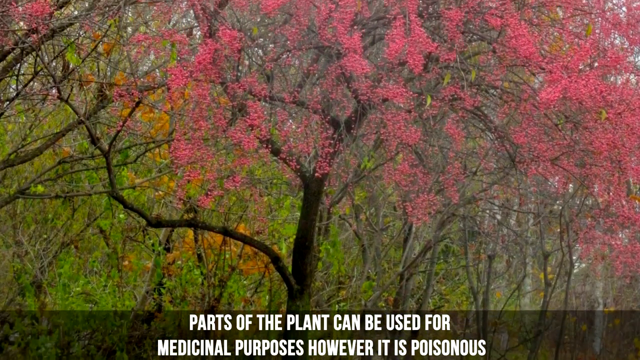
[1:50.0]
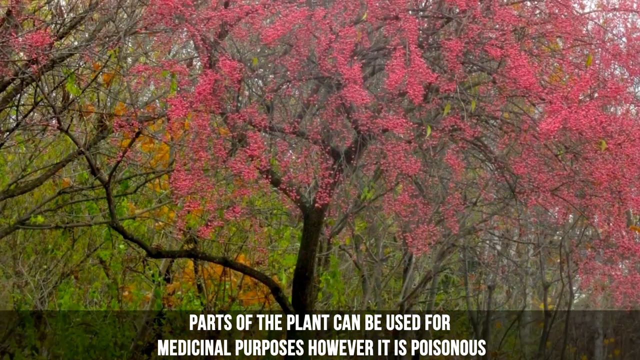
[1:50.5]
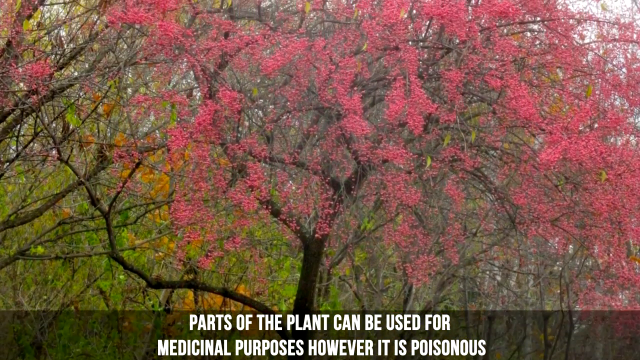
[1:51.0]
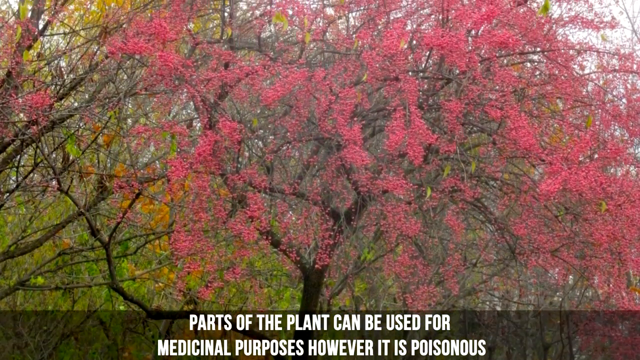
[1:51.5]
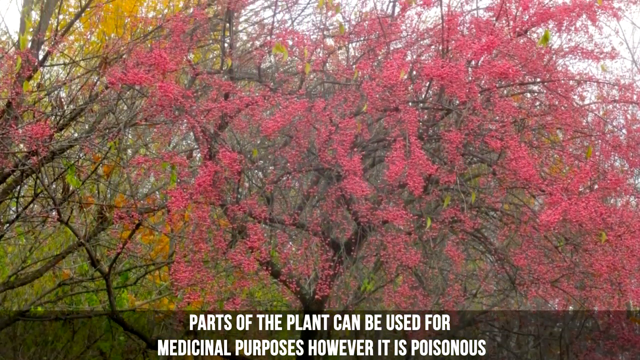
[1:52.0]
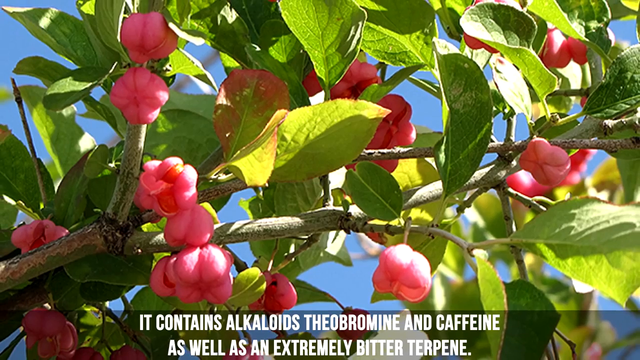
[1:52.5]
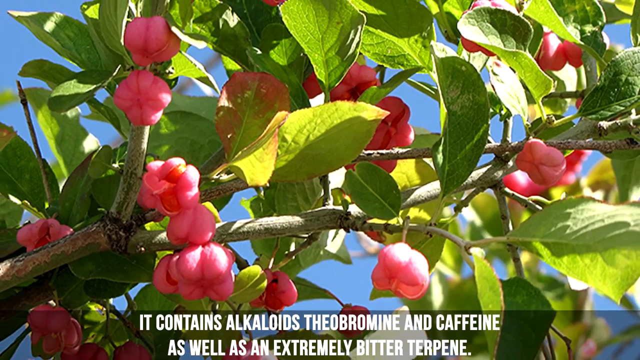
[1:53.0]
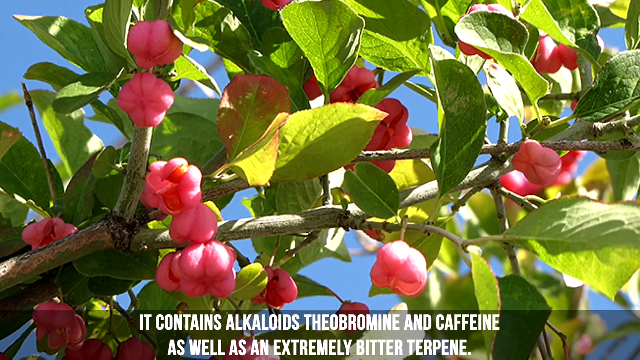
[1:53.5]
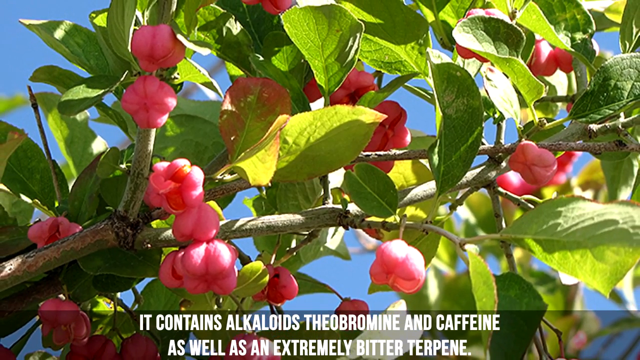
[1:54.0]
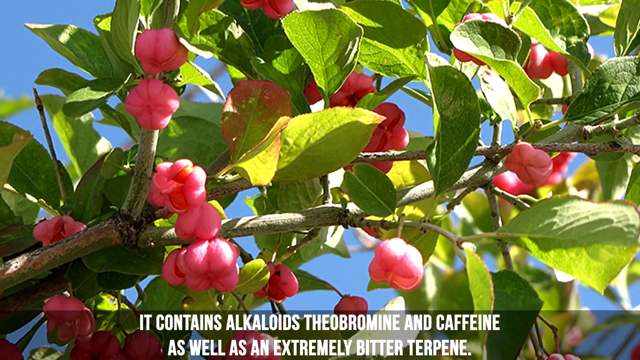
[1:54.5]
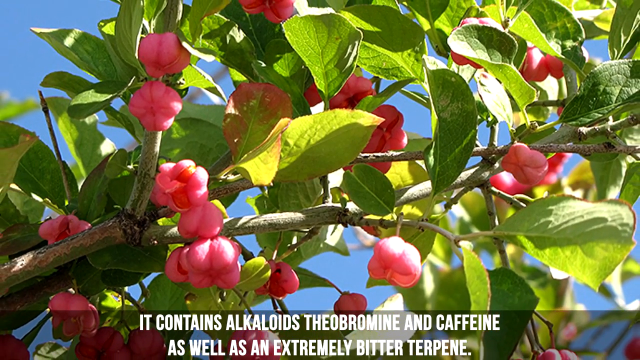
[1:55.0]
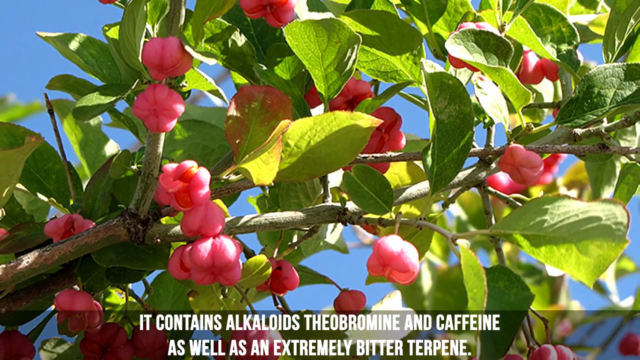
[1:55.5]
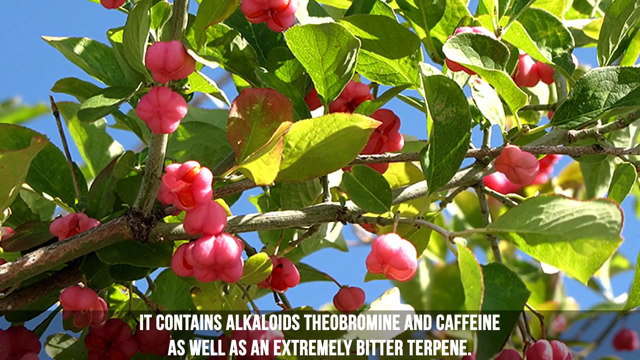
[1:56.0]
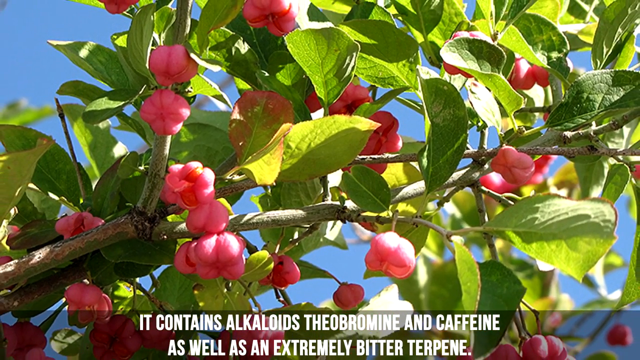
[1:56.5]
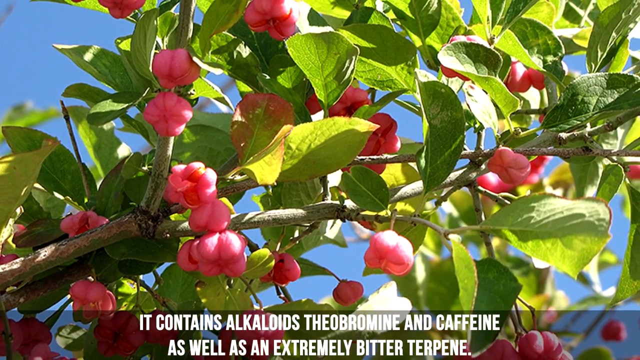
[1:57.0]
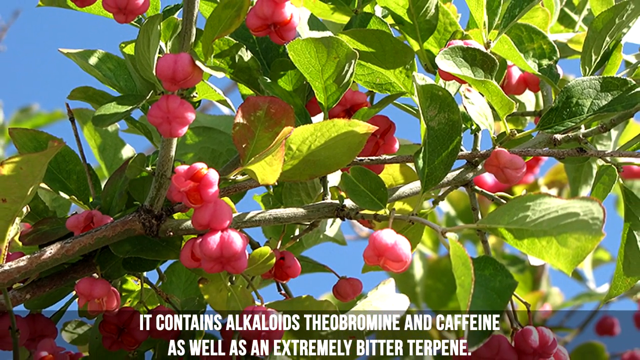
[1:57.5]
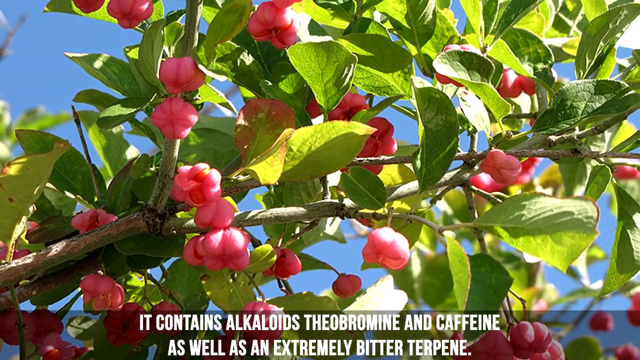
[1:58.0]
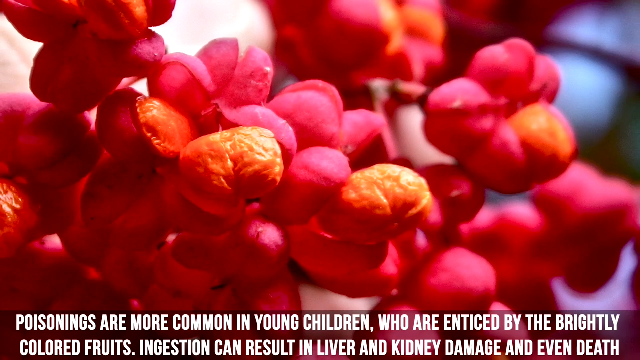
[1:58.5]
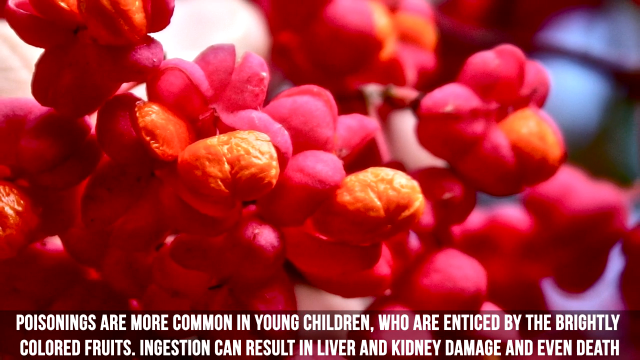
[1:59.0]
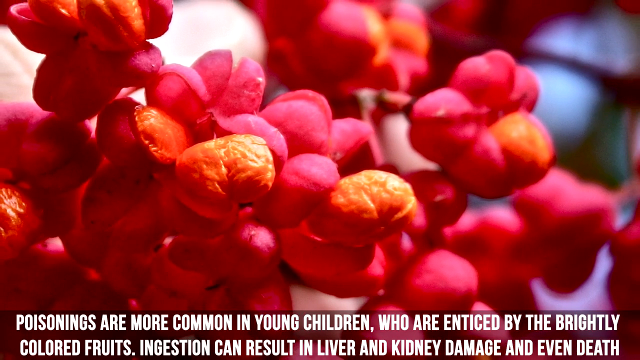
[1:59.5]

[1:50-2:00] Different pictures of the plant appear. The text says parts of the plant can be used for medicinal purposes but the rest is poisonous, and that it contains some alkaloids and caffeine as well as extremely bitter terpene. One last slide says something to the effect that the poisonings are more common in young children who are enticed by the plant's brightly colored fruit.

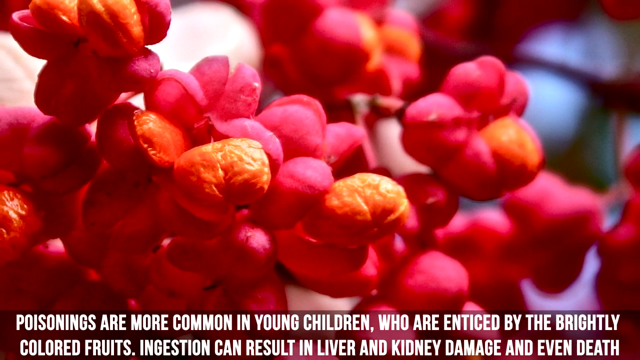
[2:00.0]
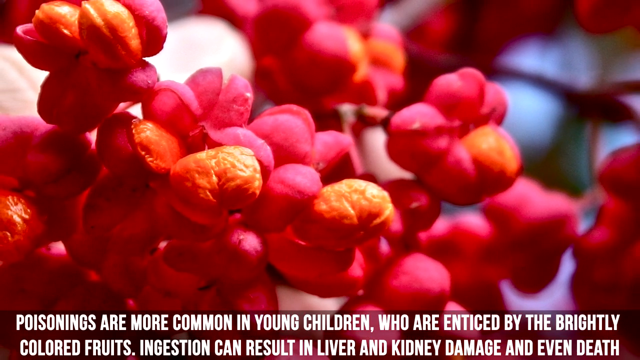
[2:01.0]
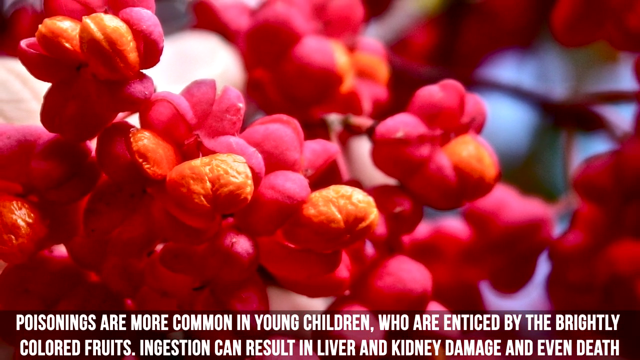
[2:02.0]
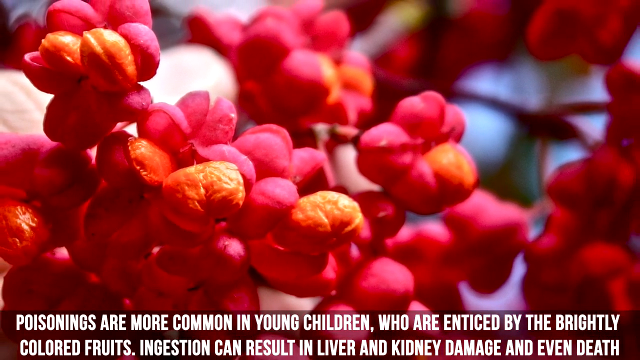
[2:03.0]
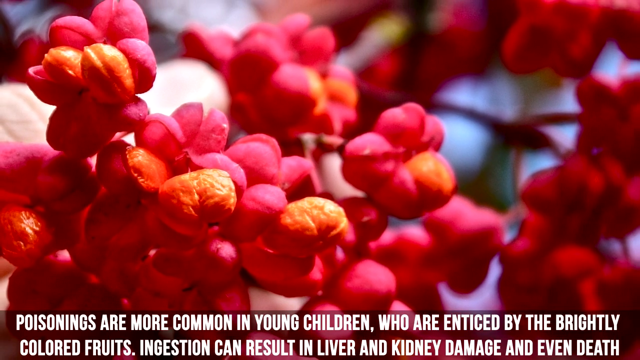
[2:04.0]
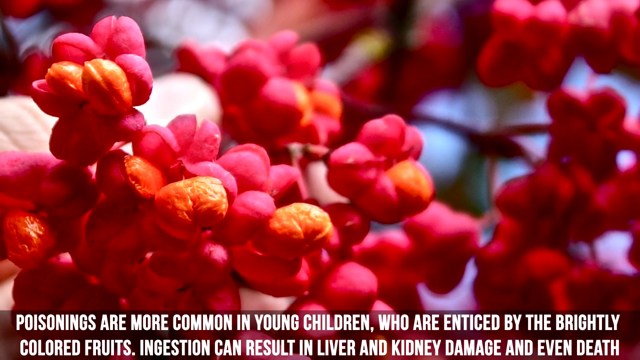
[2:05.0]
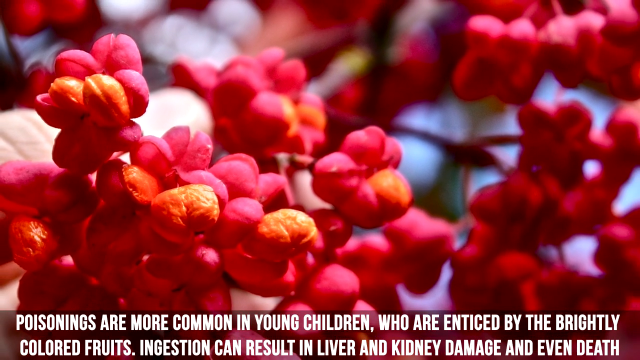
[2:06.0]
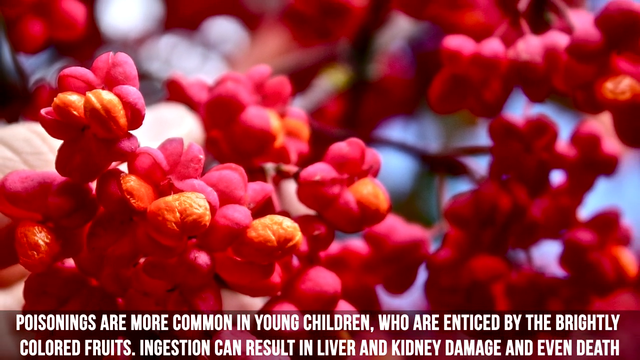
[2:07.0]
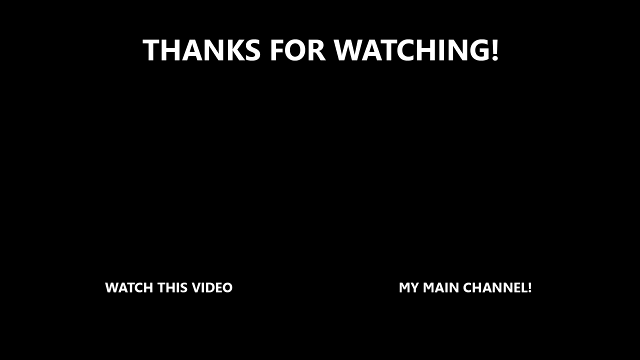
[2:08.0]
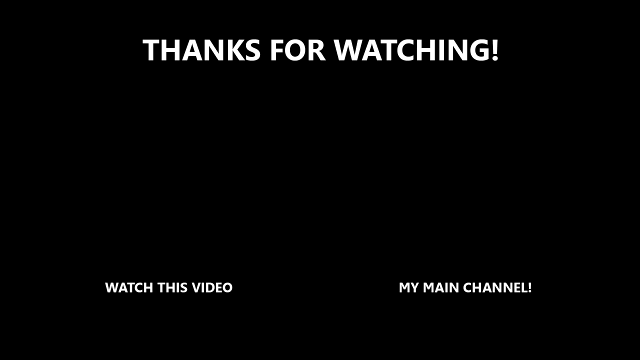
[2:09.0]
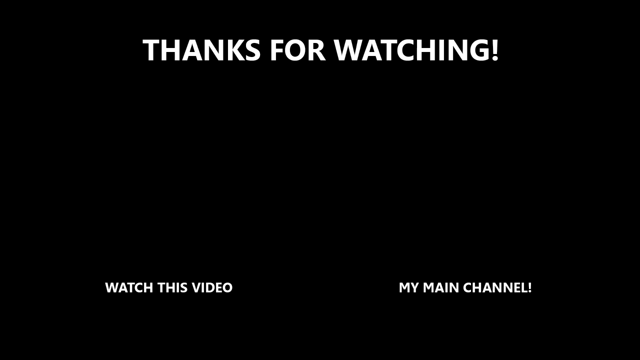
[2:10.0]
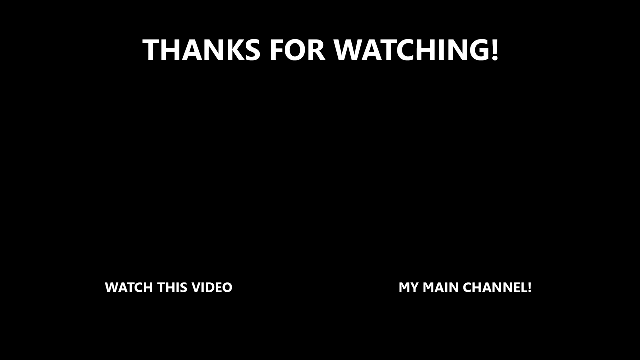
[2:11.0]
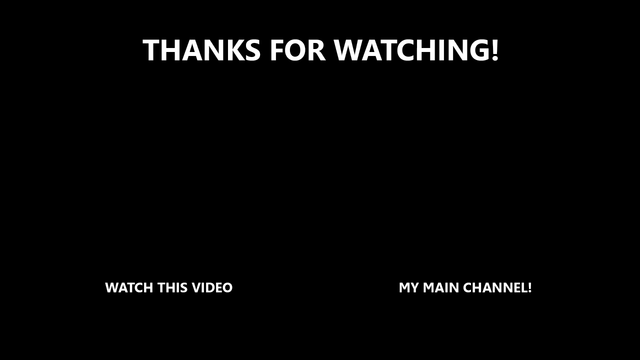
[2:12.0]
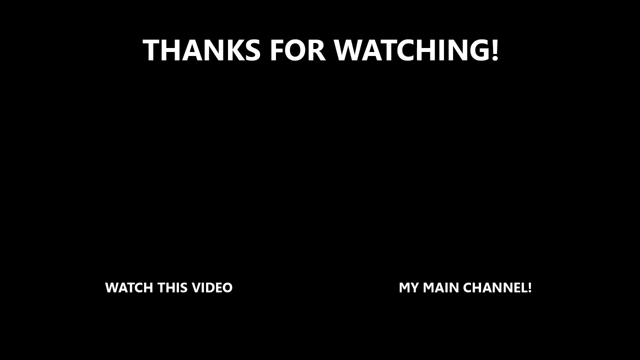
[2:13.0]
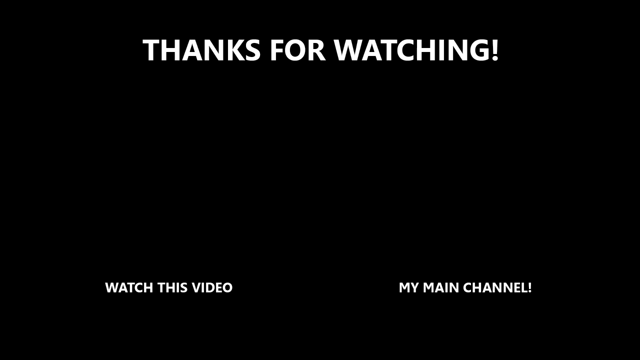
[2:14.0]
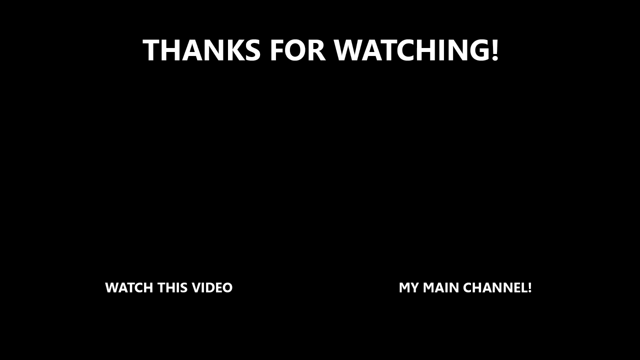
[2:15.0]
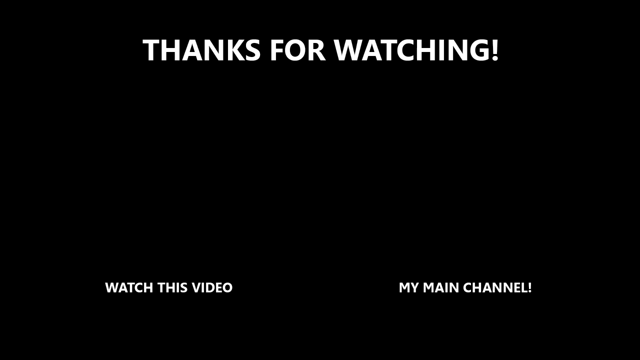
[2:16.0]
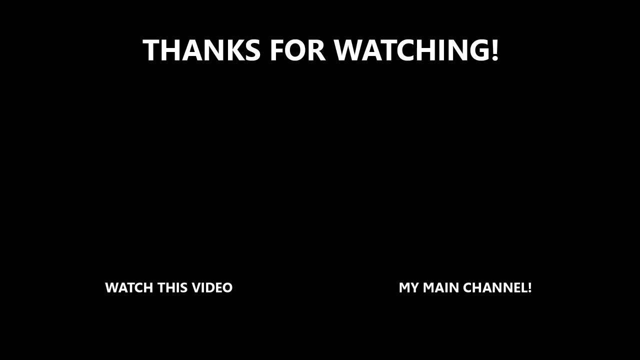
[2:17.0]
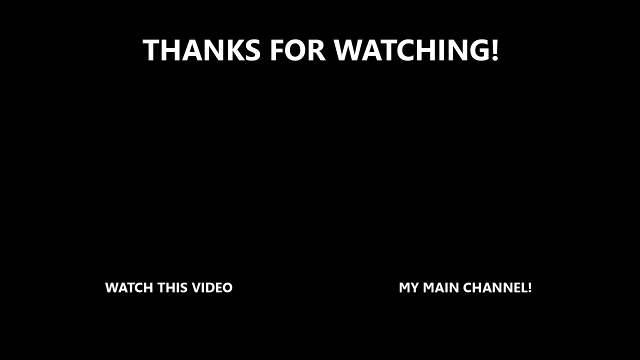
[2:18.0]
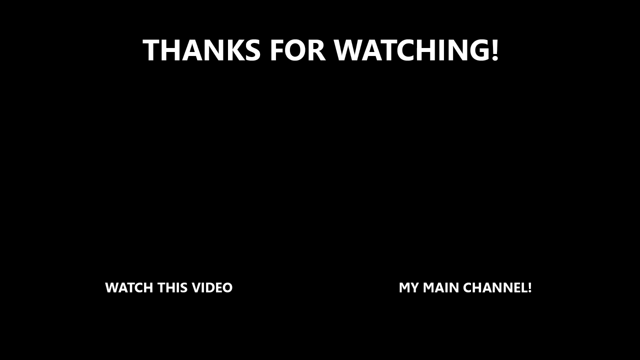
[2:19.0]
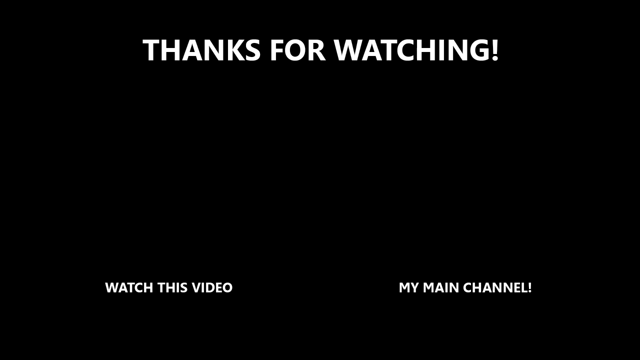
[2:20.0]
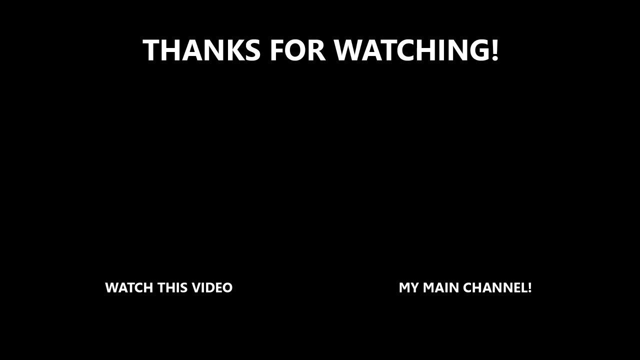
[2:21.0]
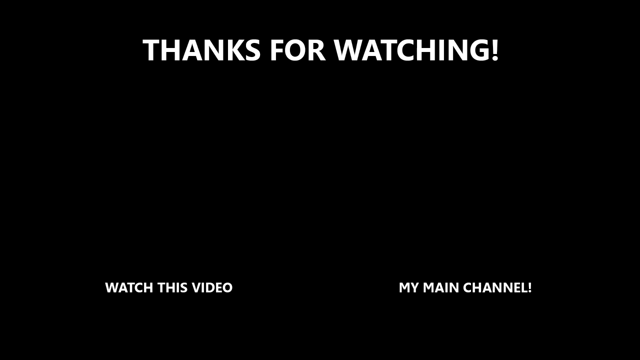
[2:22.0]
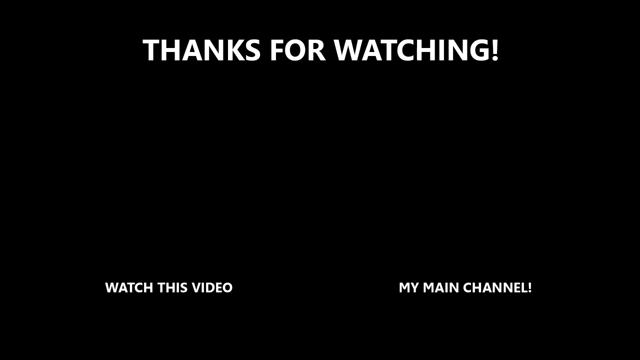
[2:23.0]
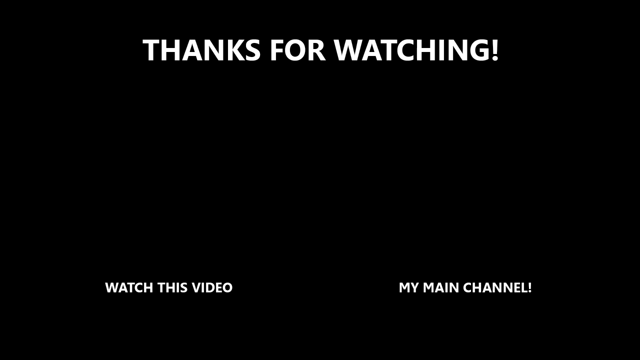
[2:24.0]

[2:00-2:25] More images of the plant appear, with text saying ingestion can result in liver and kidney damage and even death. The video then ends with the text "thanks for watching," then "watch this video," then "my main channel," apparently for a YouTube channel. The video consists of clips and still images that are panned across or zoomed in and out.